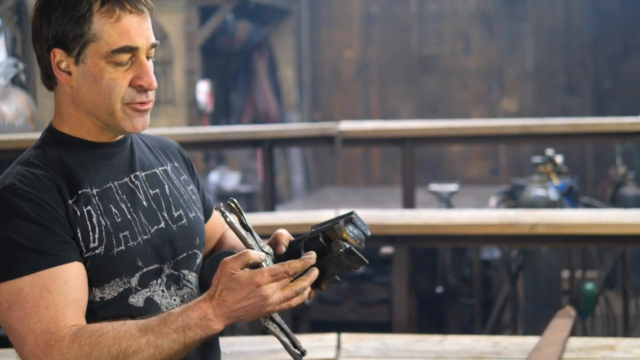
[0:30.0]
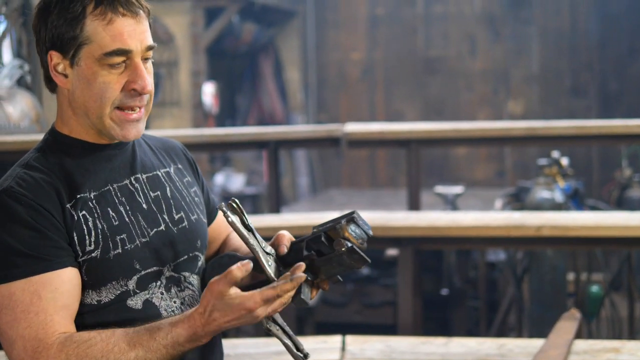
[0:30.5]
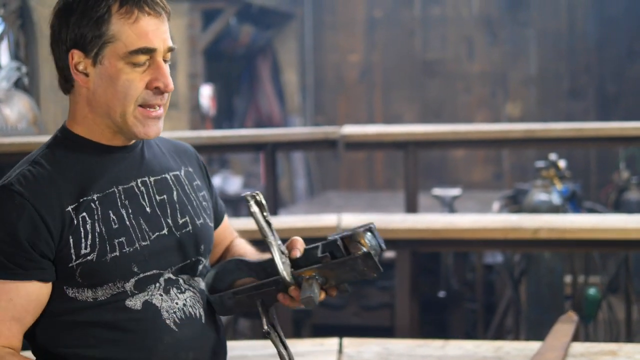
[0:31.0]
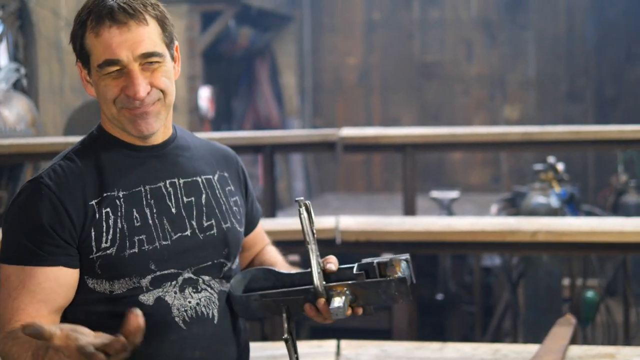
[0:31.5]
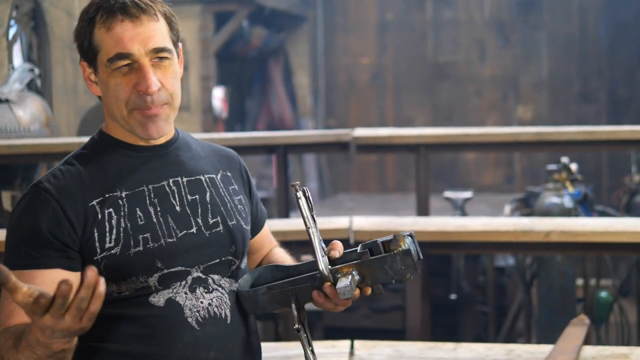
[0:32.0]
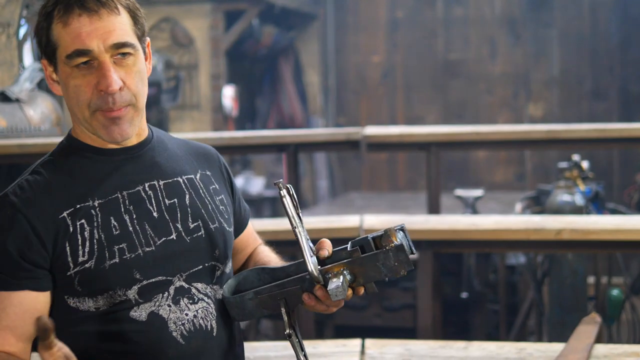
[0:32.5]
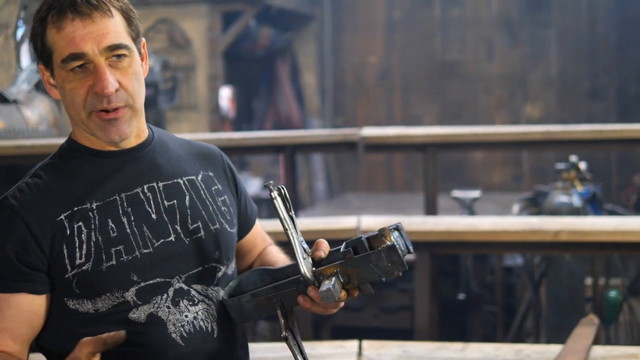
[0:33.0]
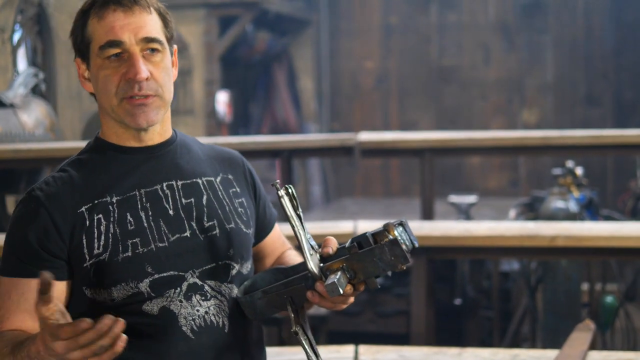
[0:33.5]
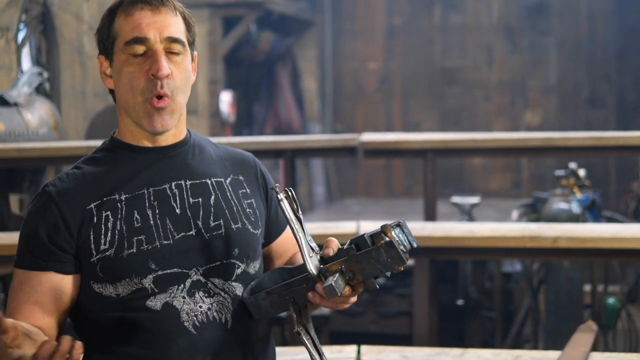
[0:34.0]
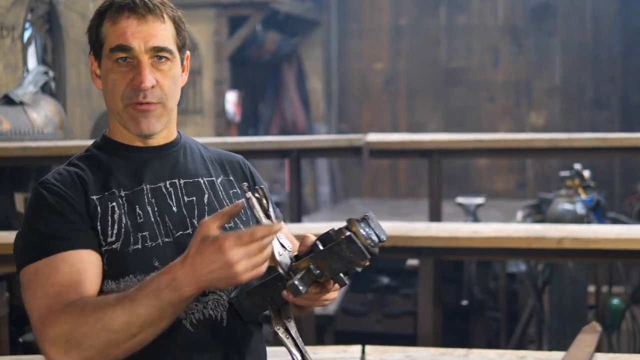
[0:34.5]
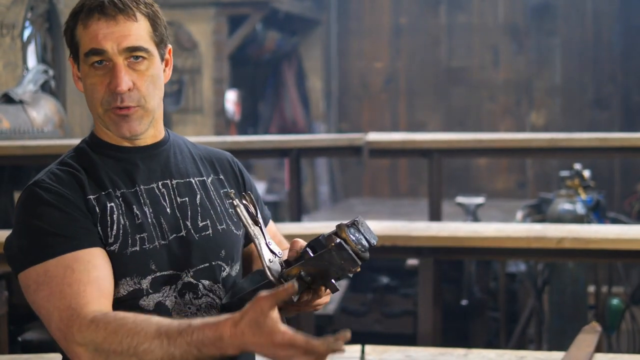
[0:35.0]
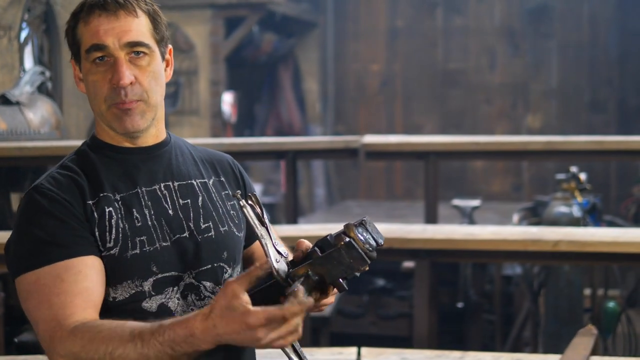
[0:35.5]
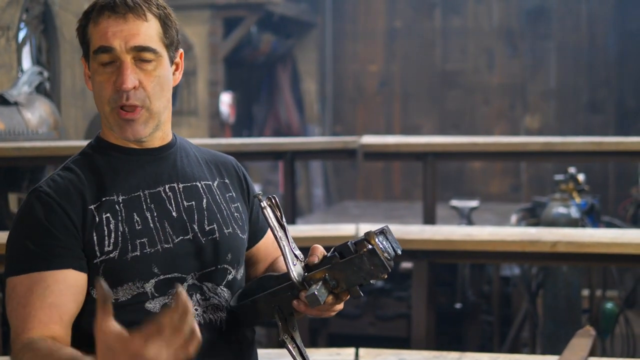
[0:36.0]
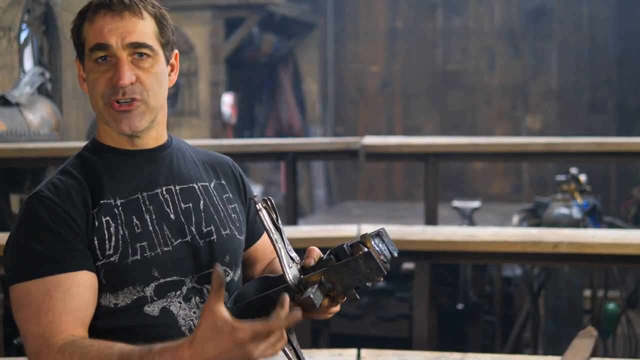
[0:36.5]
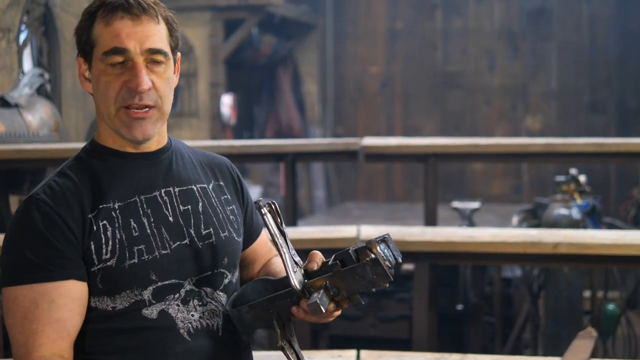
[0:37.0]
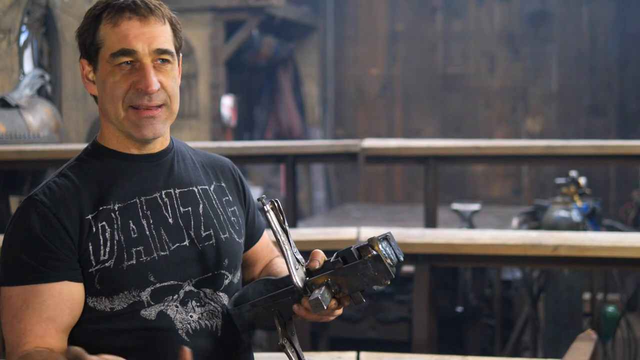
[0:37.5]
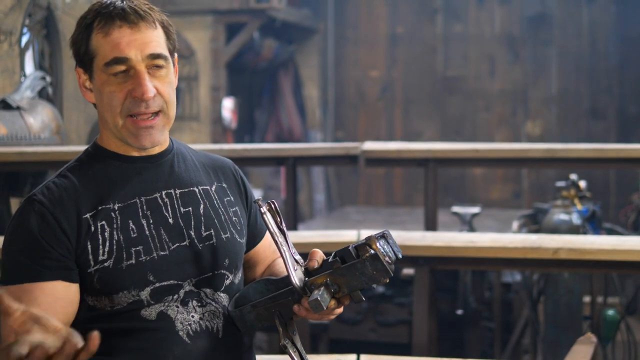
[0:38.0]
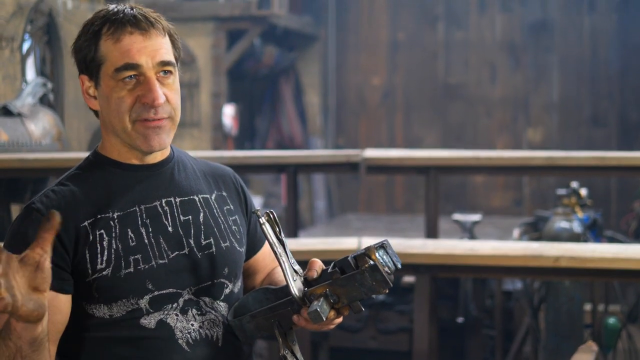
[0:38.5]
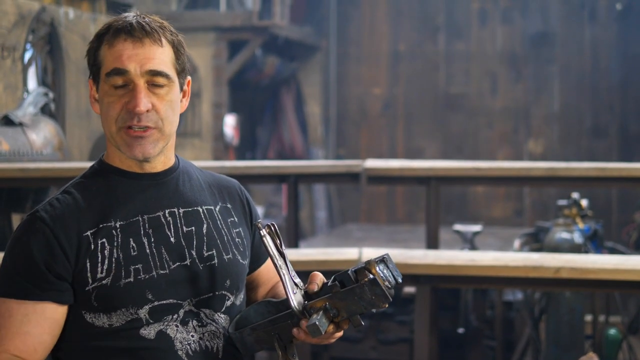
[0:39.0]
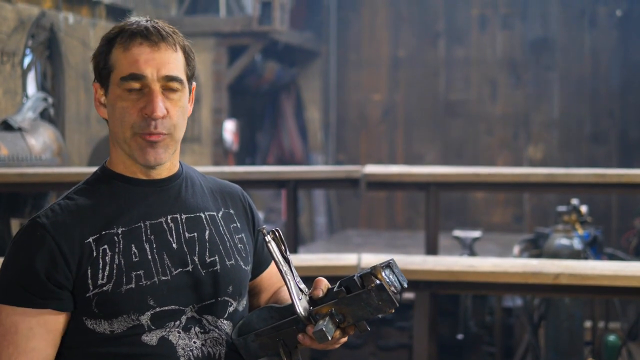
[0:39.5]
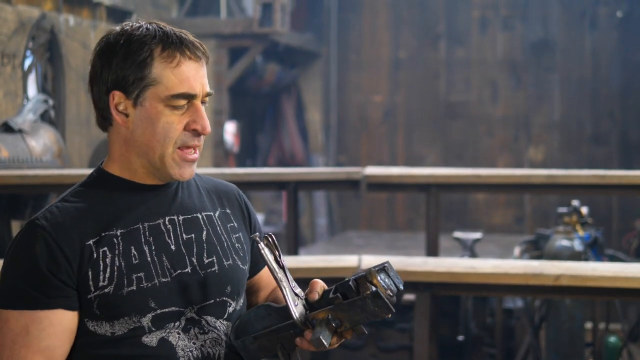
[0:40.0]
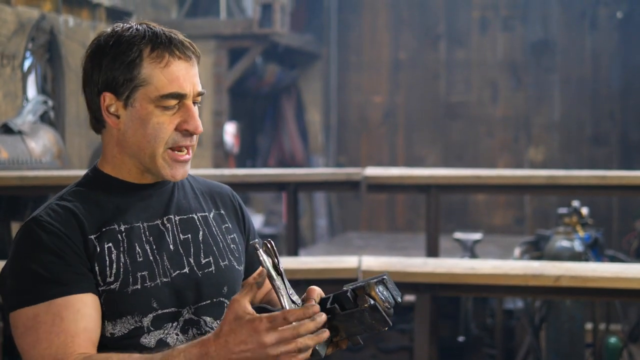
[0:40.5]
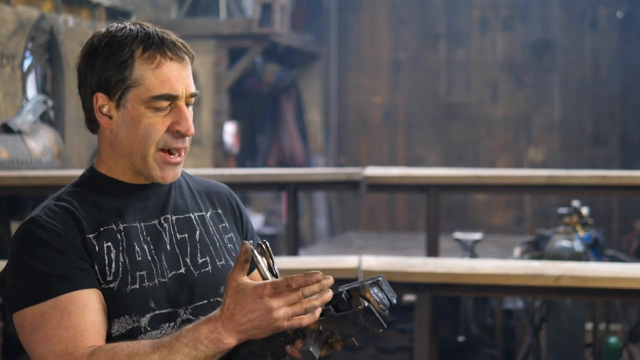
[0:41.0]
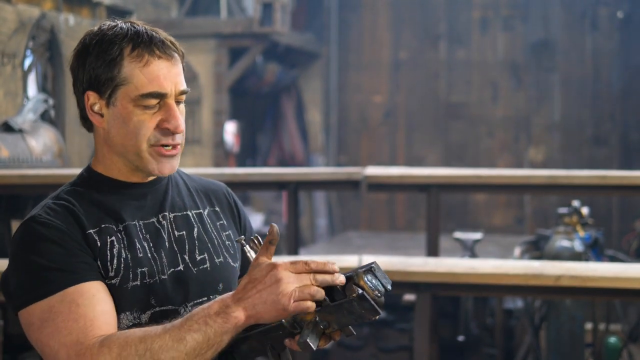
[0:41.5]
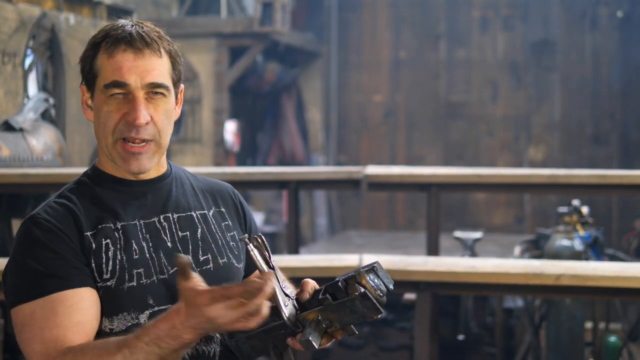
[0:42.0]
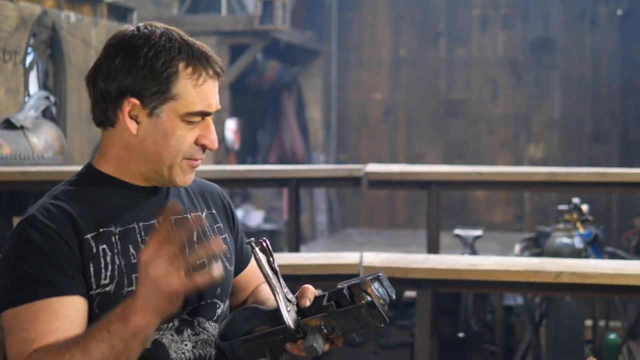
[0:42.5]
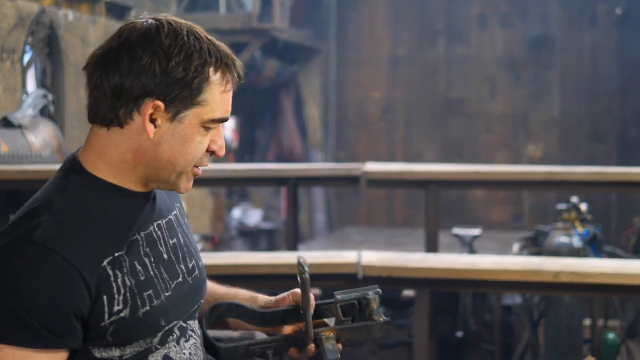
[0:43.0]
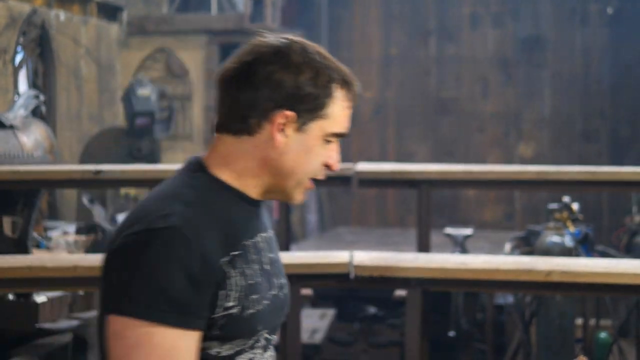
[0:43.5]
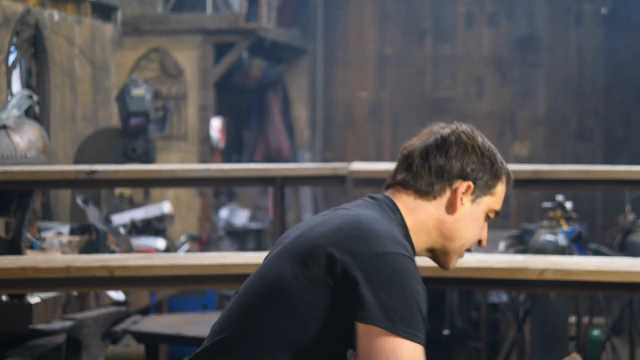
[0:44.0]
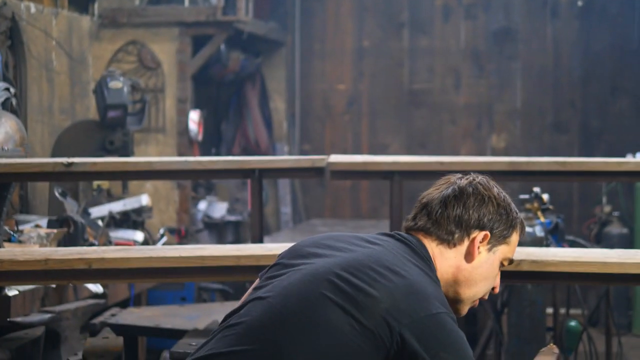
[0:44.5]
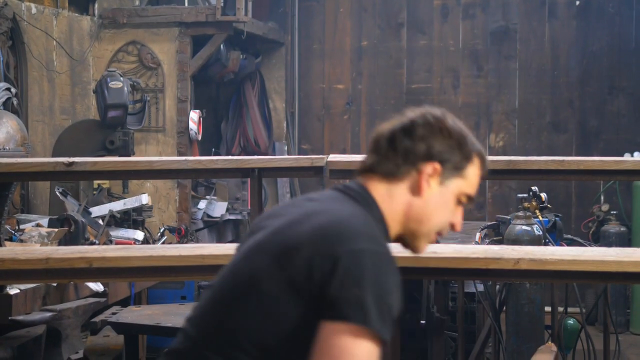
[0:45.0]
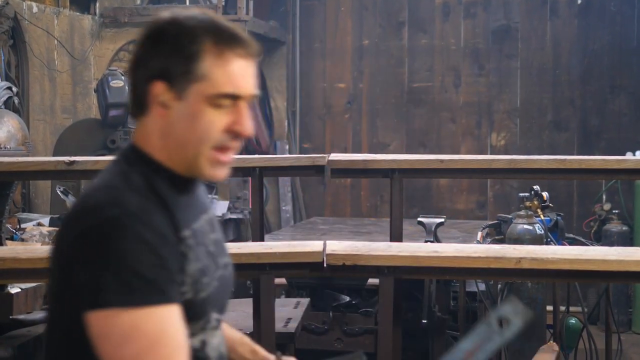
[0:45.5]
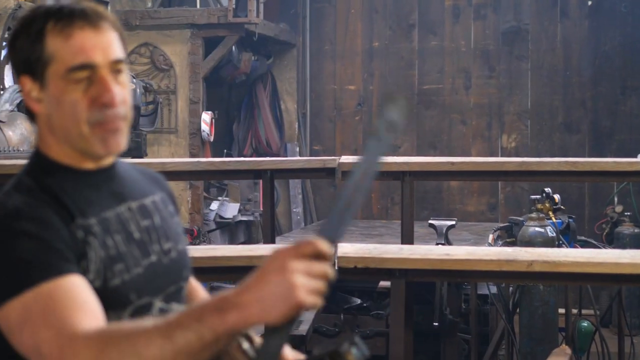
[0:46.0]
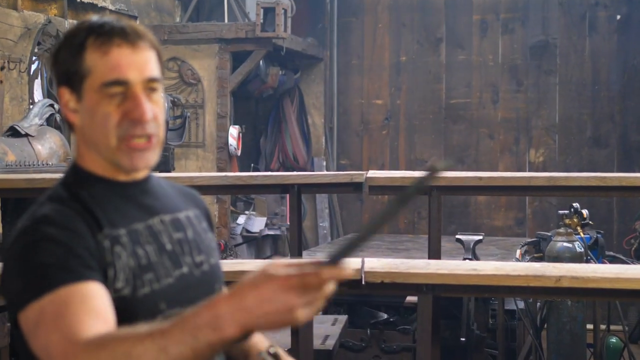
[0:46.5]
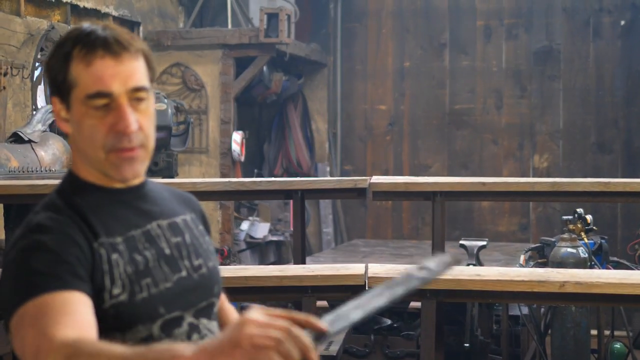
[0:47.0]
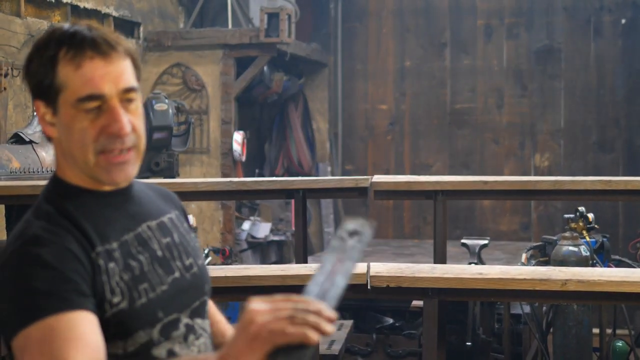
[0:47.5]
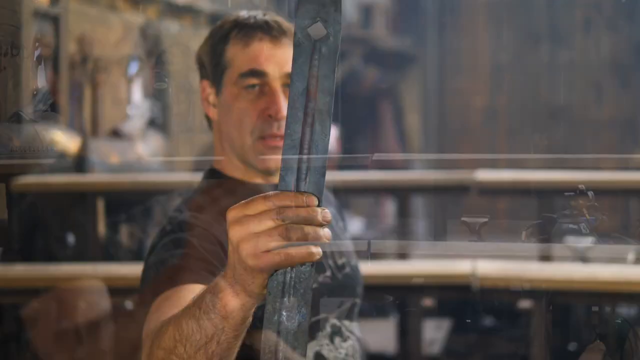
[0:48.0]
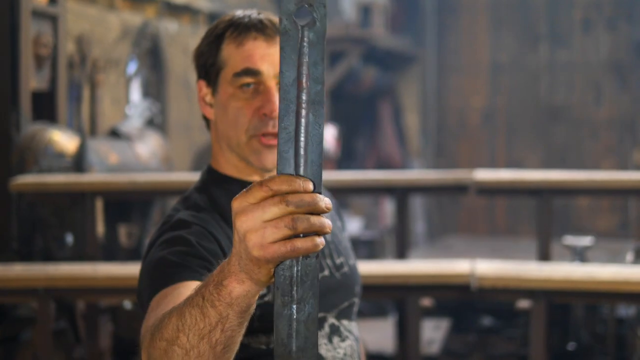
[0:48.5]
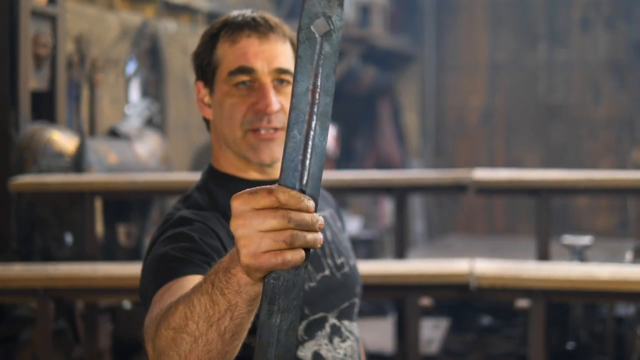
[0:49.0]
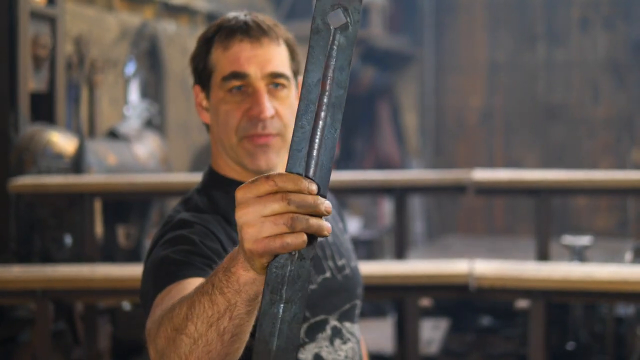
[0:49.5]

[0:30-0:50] The same man in the Danzig shirt holds the metal device, now held together by just one vice grip, with the tanks still in the background. He picks up another piece of metal, a long piece, probably about two feet long, with a hole at the top and a line pushing out toward the camera running all the way down from the hole.